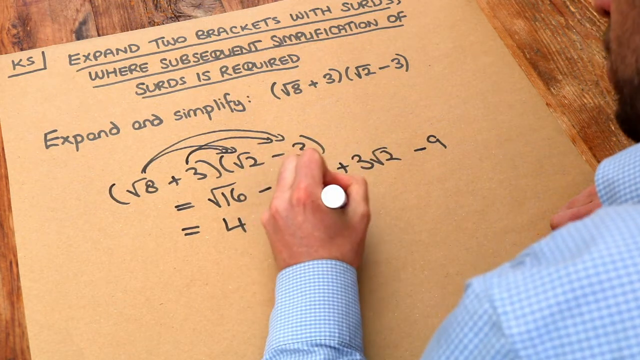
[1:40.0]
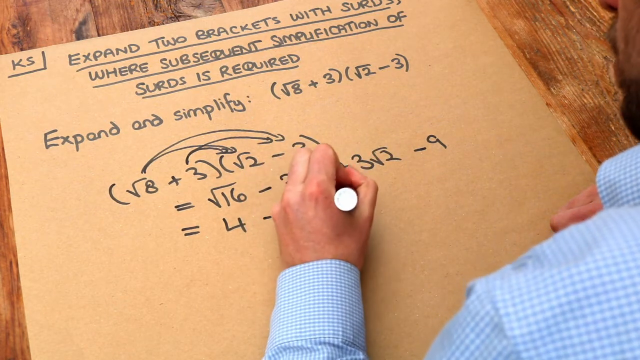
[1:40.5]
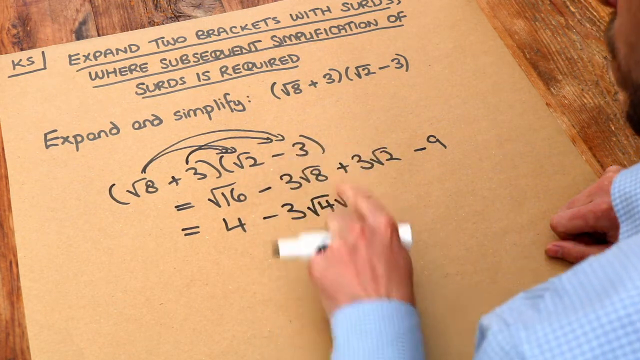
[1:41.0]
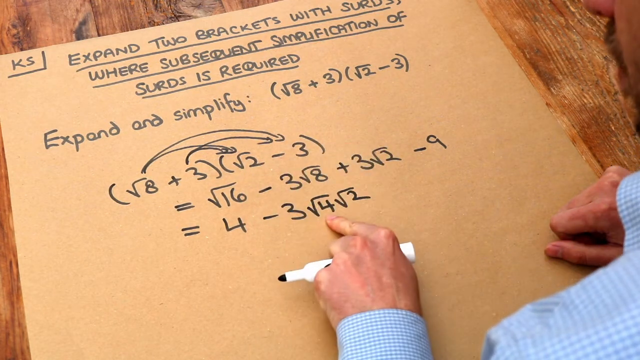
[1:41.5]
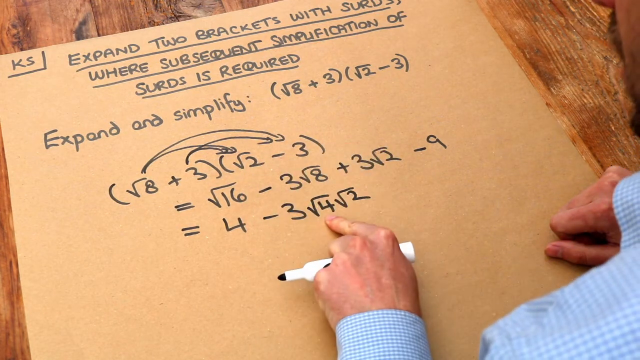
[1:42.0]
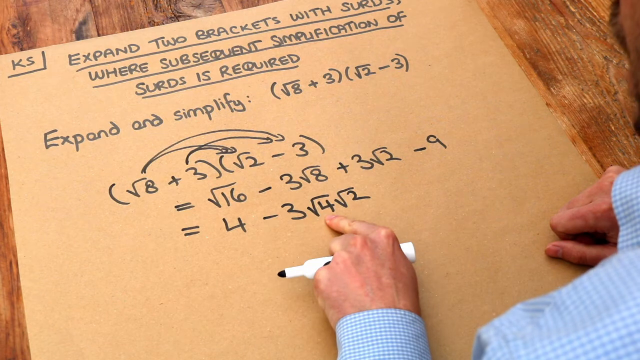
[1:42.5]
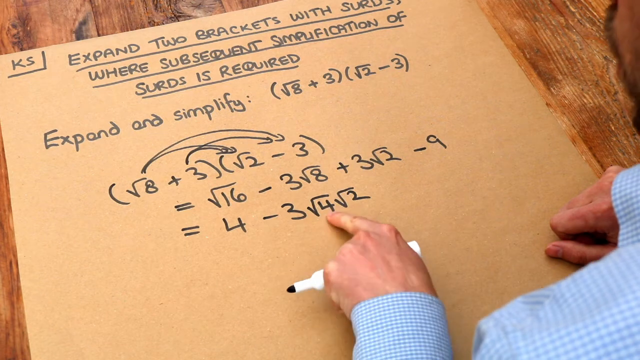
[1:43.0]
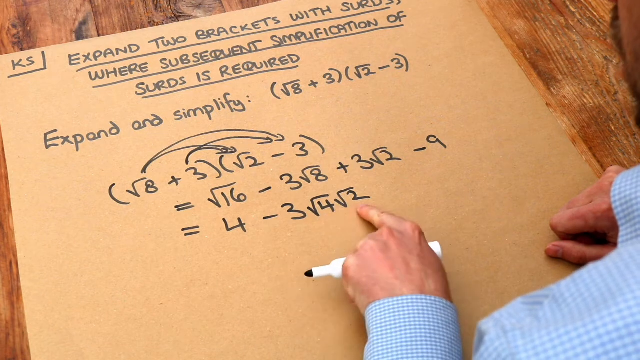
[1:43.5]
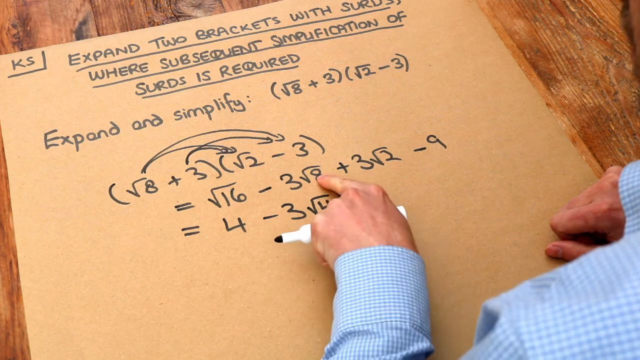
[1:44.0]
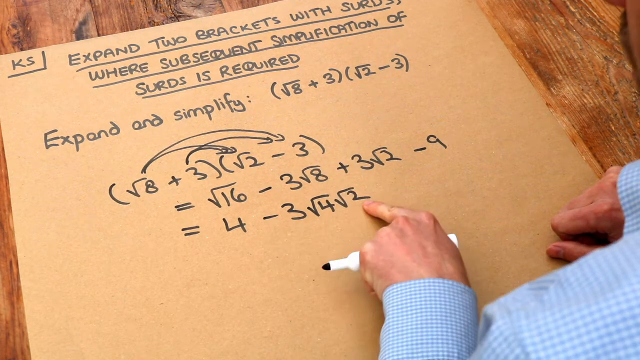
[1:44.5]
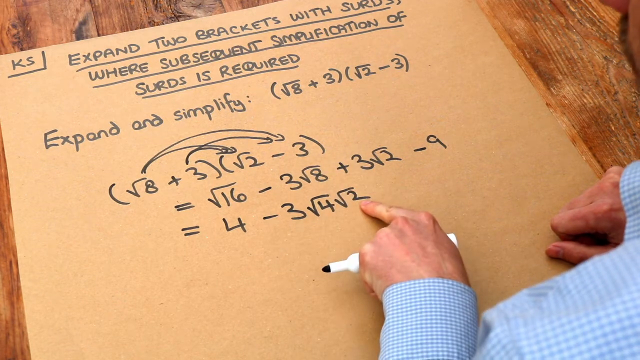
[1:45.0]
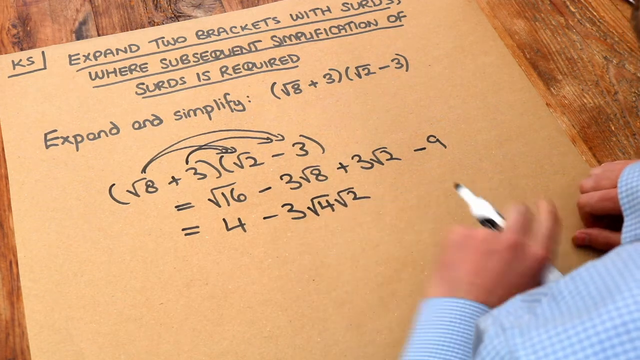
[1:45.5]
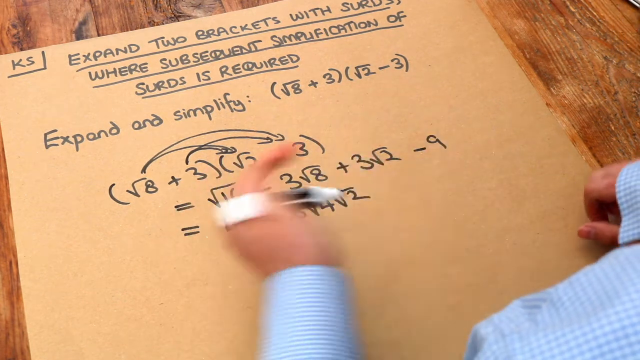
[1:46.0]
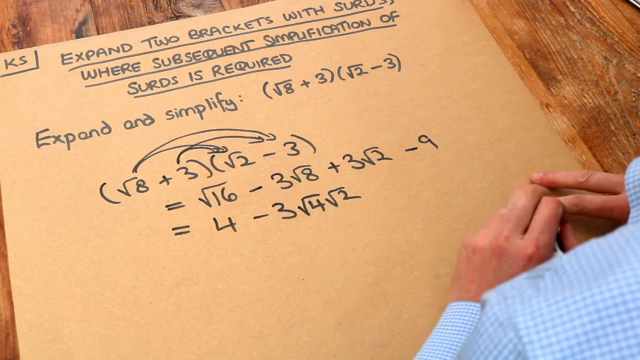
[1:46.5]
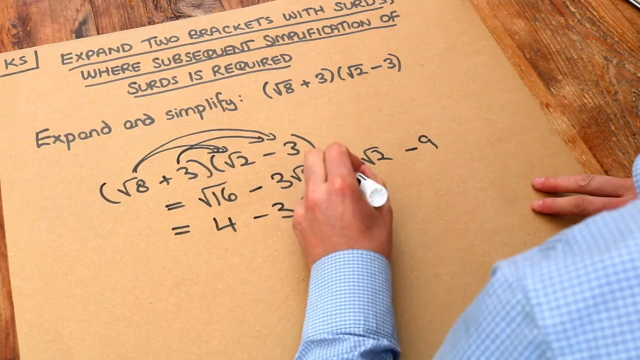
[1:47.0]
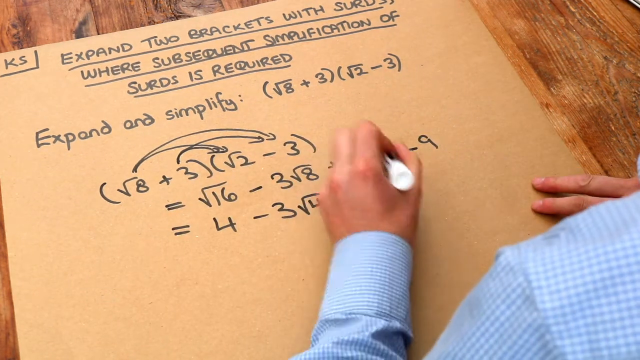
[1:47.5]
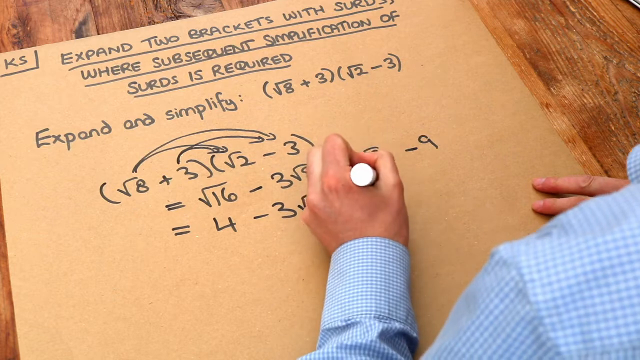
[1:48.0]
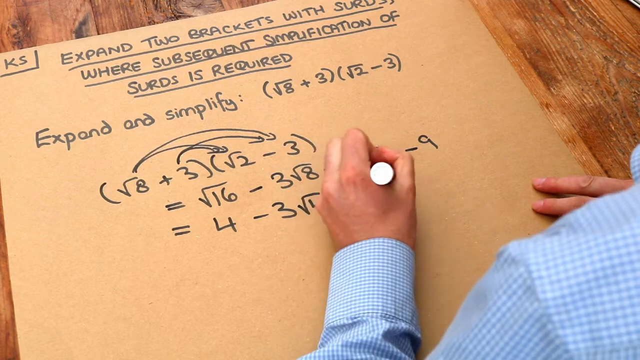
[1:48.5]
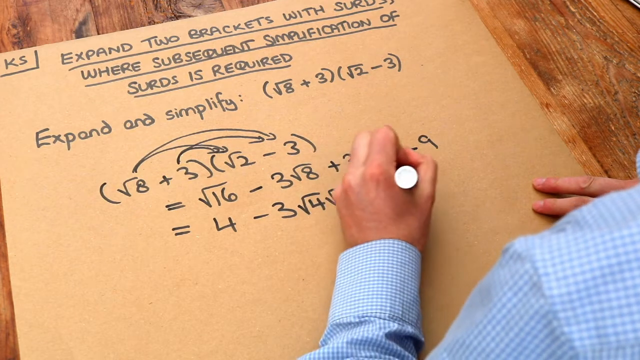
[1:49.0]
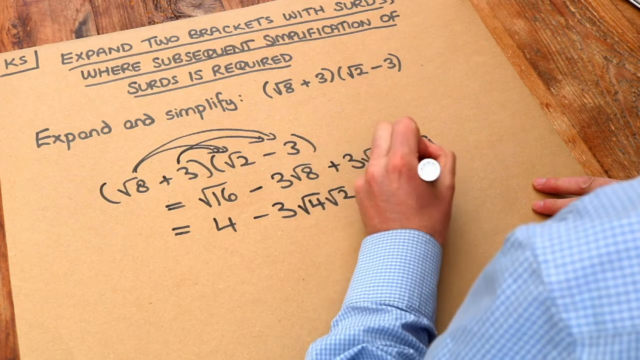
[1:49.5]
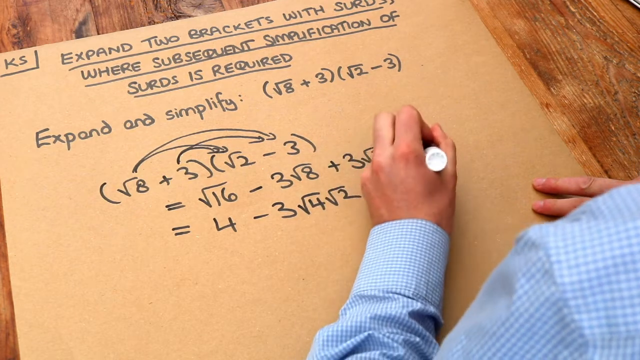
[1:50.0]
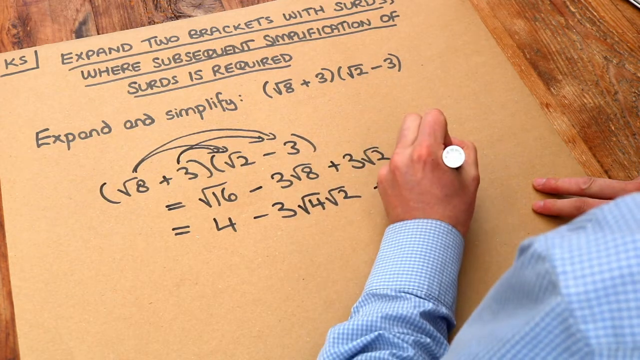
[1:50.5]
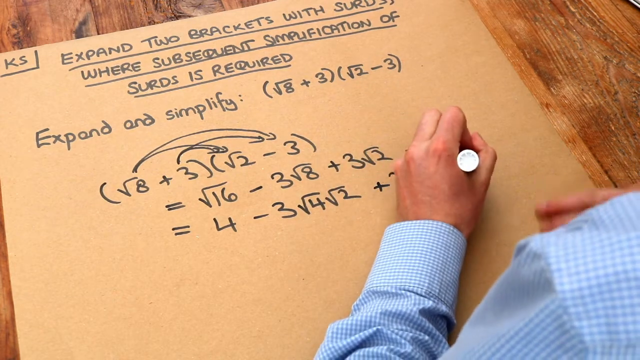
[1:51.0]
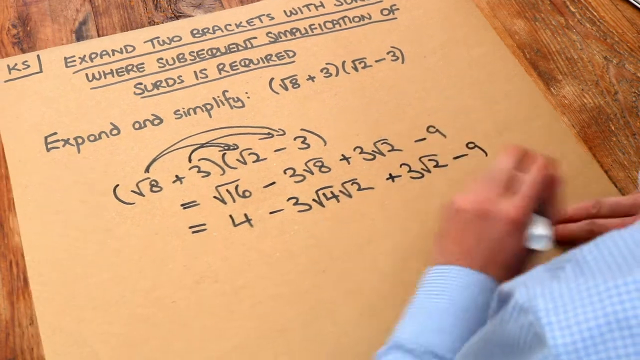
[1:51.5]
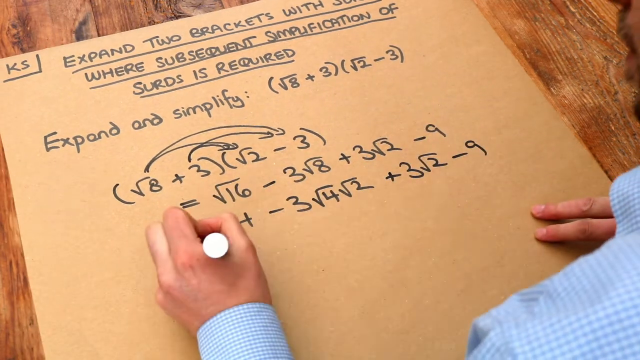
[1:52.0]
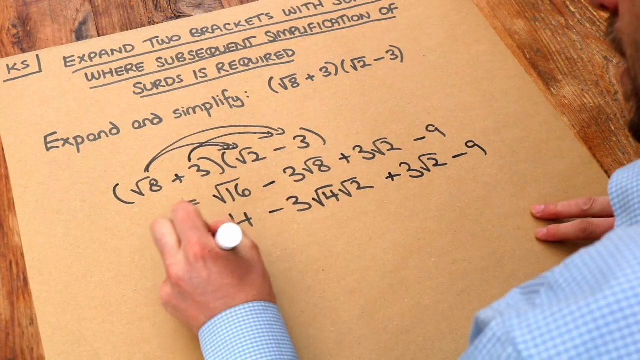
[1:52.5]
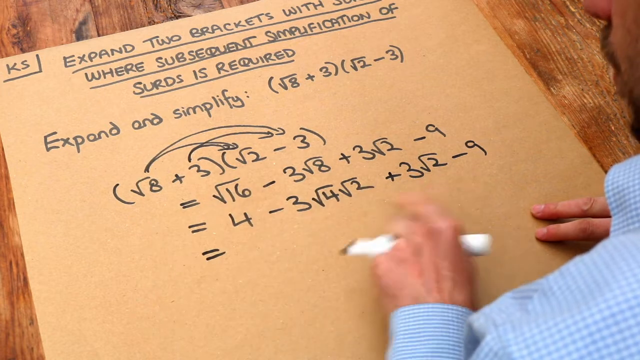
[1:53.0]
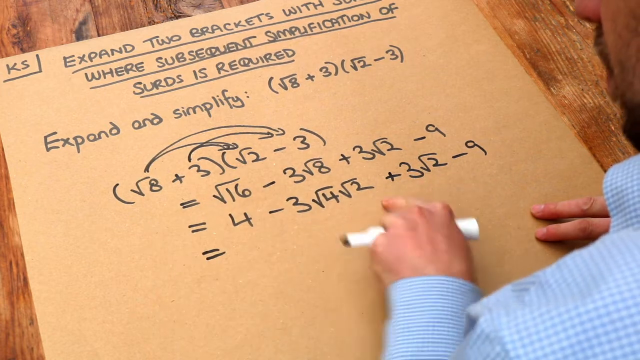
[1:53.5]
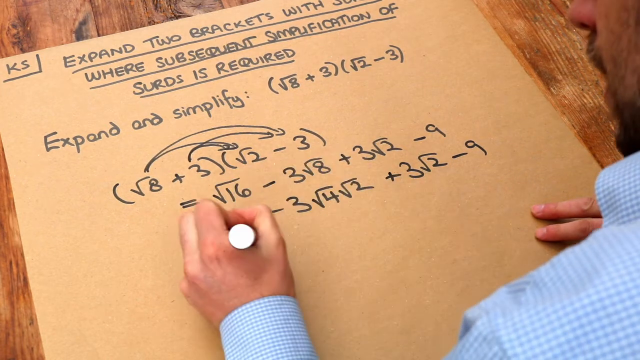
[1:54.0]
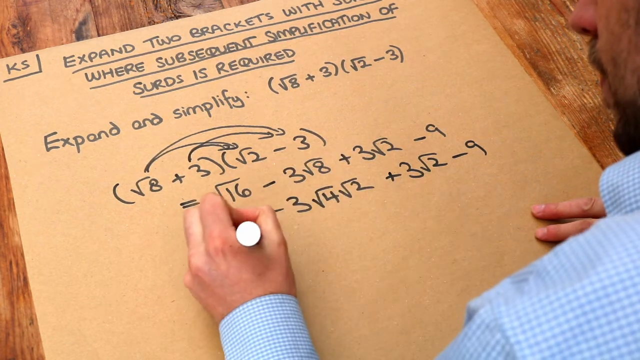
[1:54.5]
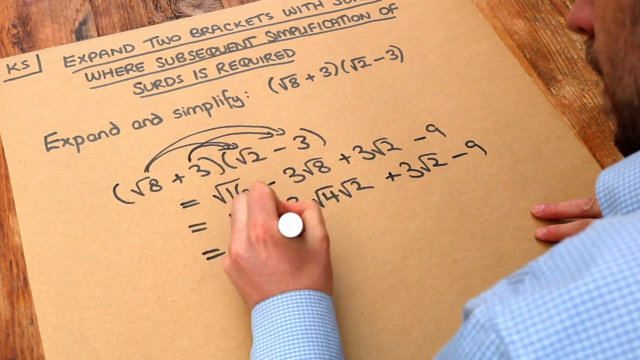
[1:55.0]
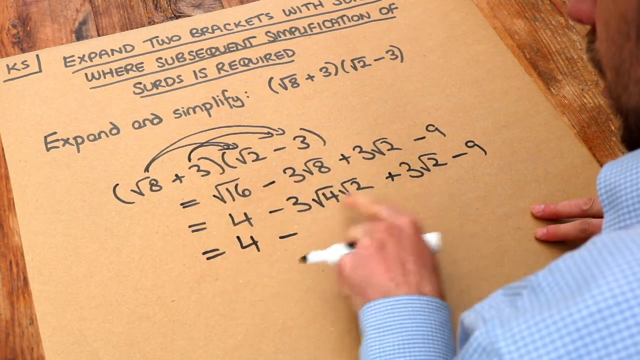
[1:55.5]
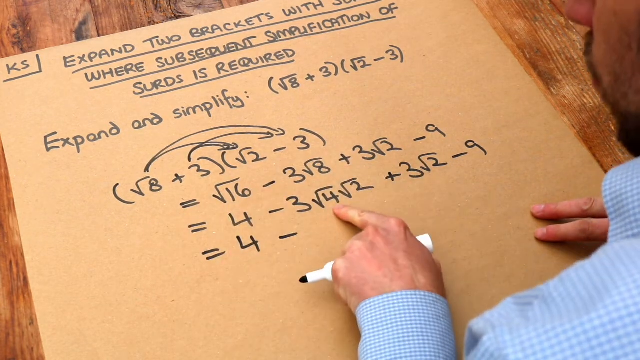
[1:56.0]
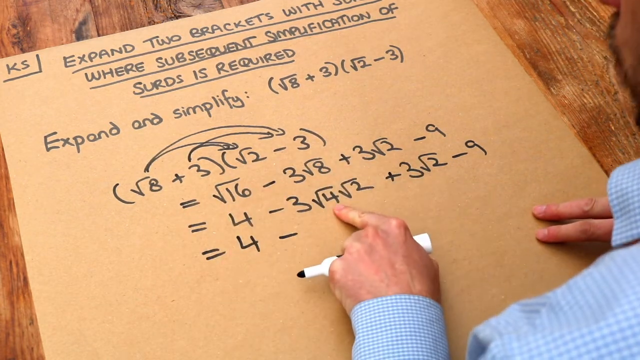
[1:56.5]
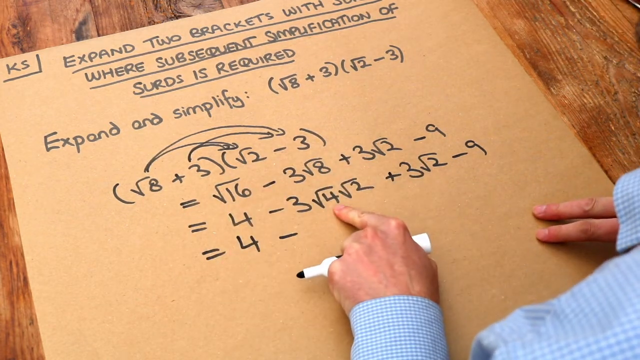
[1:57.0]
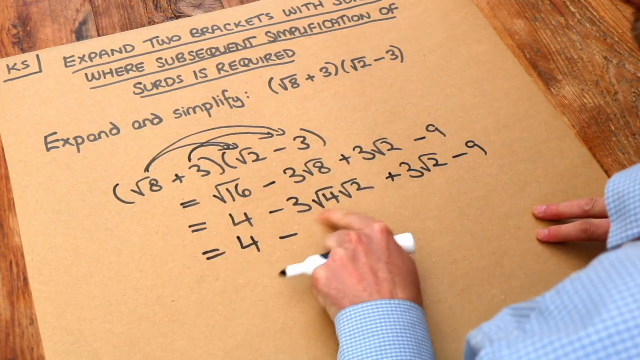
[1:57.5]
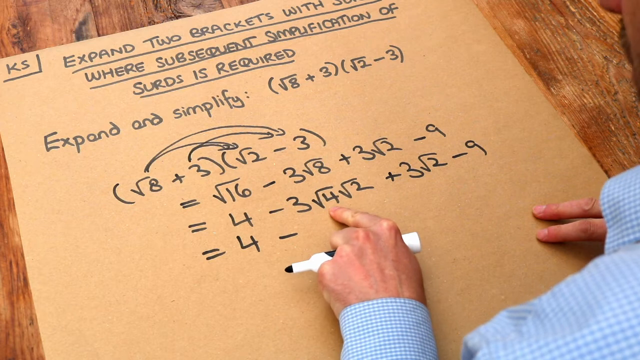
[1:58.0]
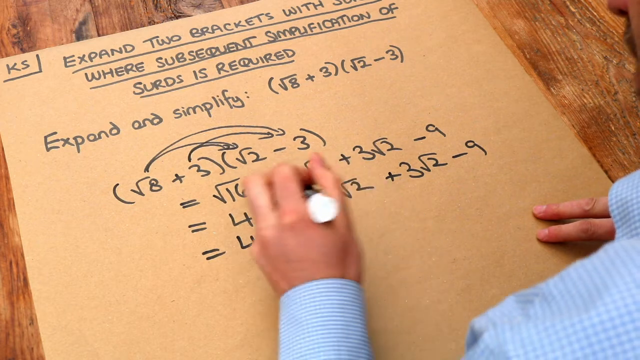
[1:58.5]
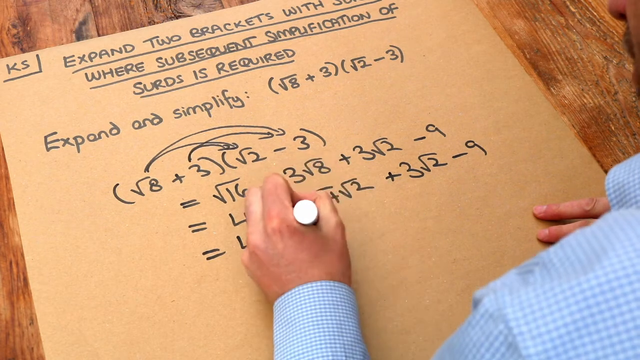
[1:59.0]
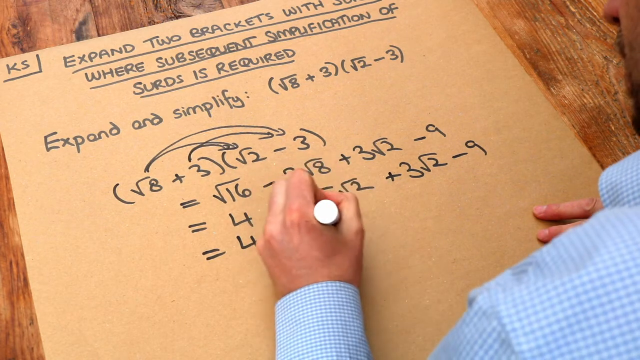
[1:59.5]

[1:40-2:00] On the line reading equals four minus three, he writes the square root of four and right beside it the square root of two. With his left pointer finger he points at the square root of four, his jaw still moving, then at the square root of two, up to the square root of eight, and back down to the square root of two. He brings the hand close to him, moves it out wide to the left and back down, then up again to write next to the square root of two: plus three square root of two minus nine. Just below, where his shirt is, the pointer and middle fingers of his right hand stick out. His left hand moves underneath the equal sign and writes another equal sign, then moves back to the 3, square root of 4, square root of 2 and points at it while he continues talking. Where he just wrote the equal sign he writes 4 minus, points at the square root of 4 again, and starts writing next to the minus.